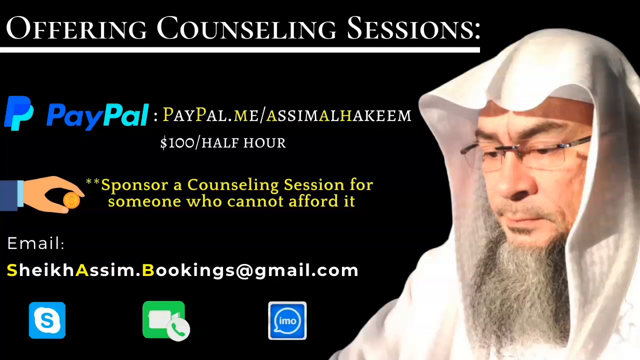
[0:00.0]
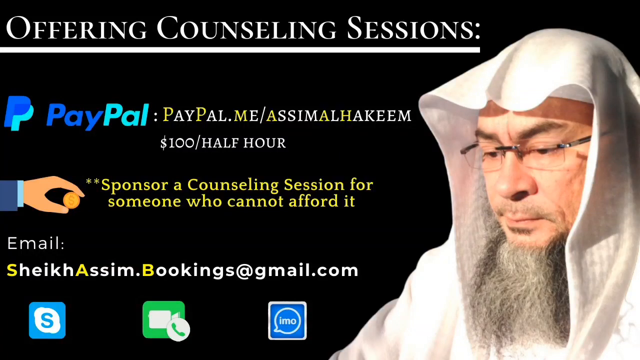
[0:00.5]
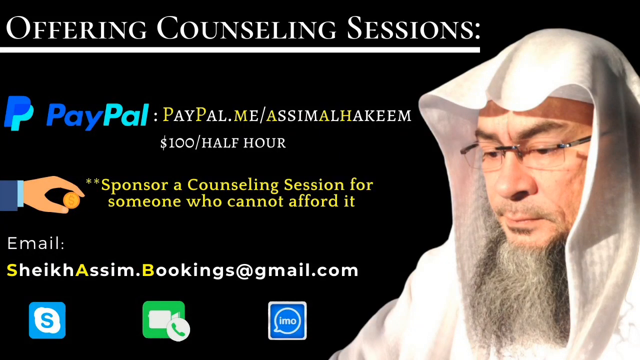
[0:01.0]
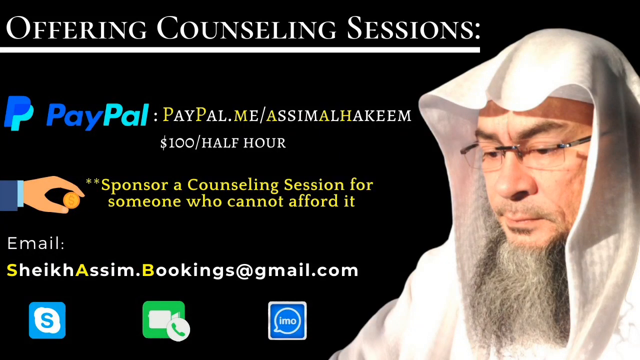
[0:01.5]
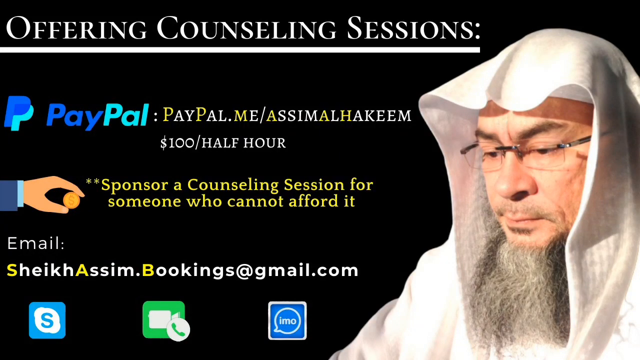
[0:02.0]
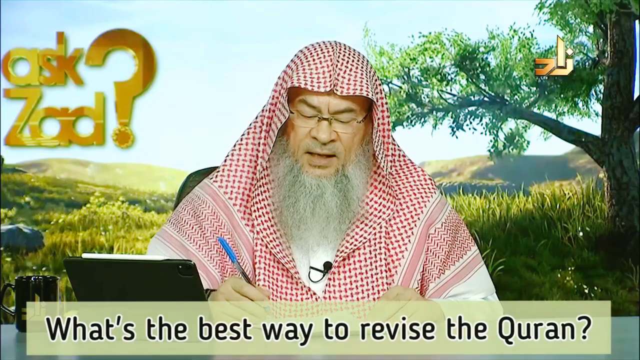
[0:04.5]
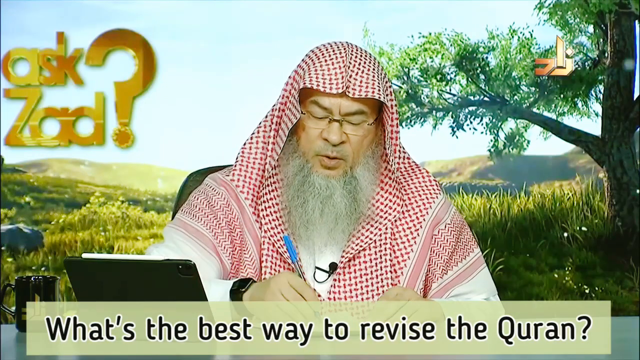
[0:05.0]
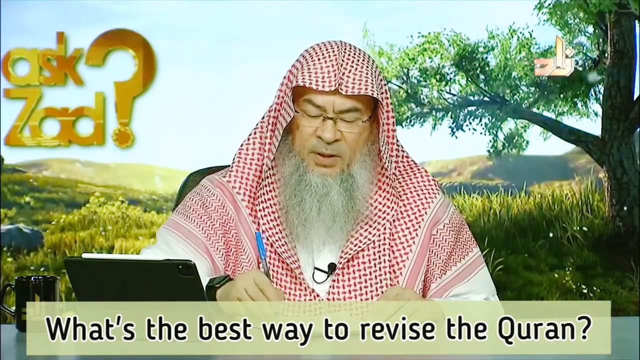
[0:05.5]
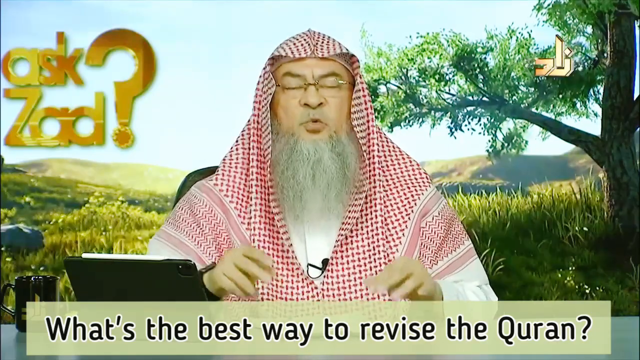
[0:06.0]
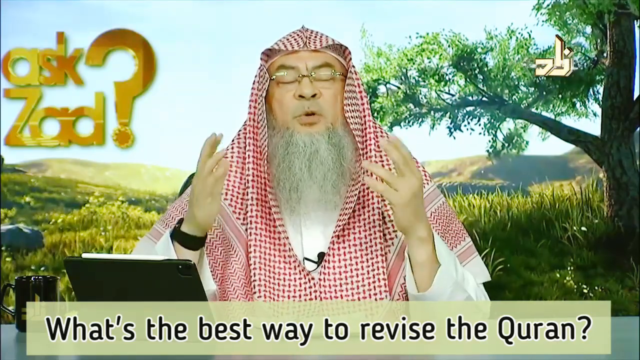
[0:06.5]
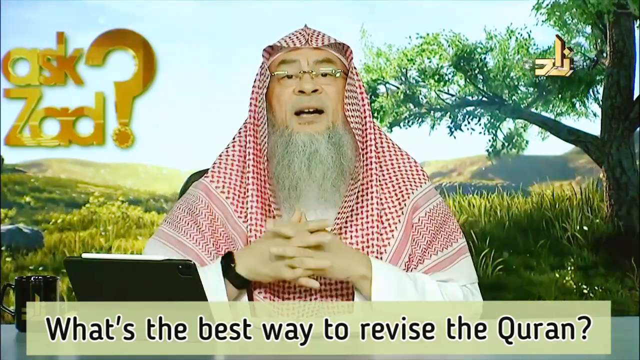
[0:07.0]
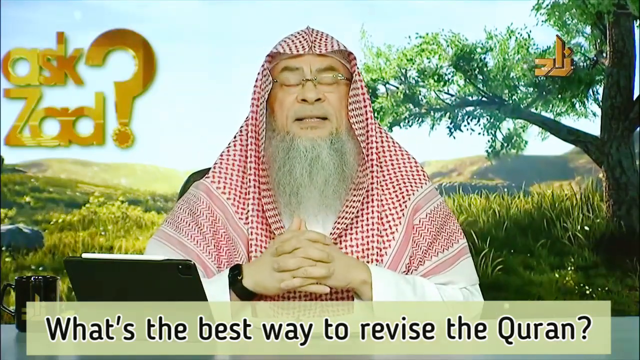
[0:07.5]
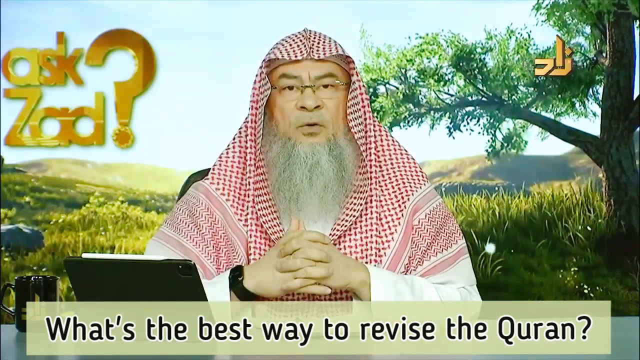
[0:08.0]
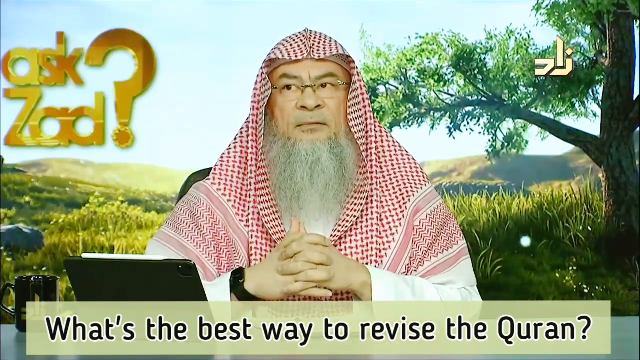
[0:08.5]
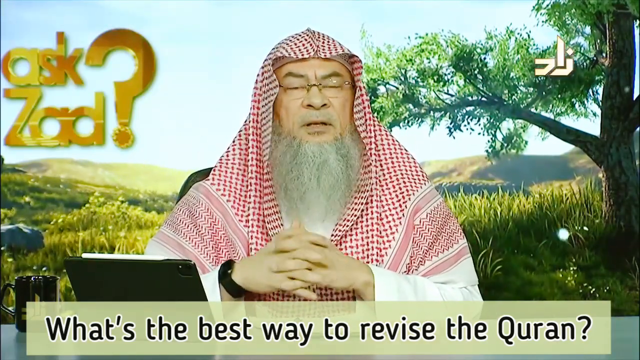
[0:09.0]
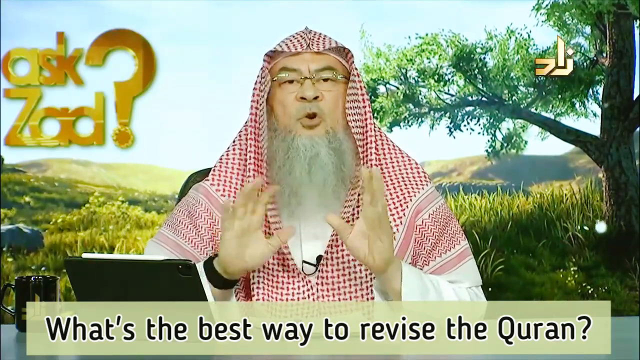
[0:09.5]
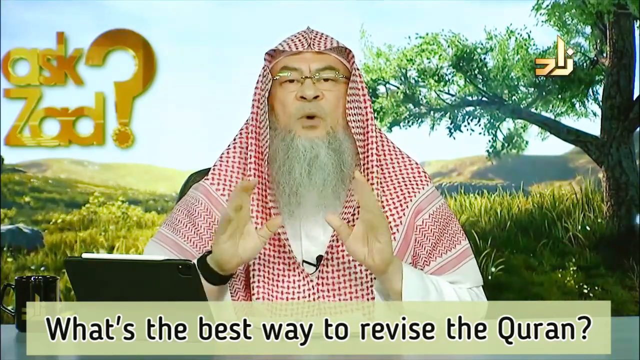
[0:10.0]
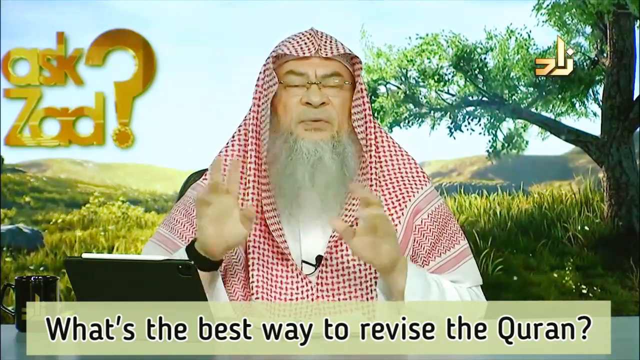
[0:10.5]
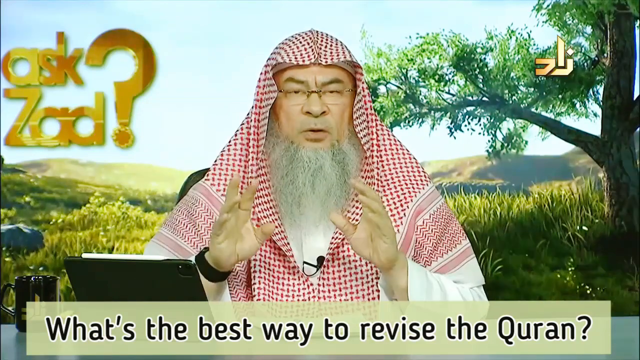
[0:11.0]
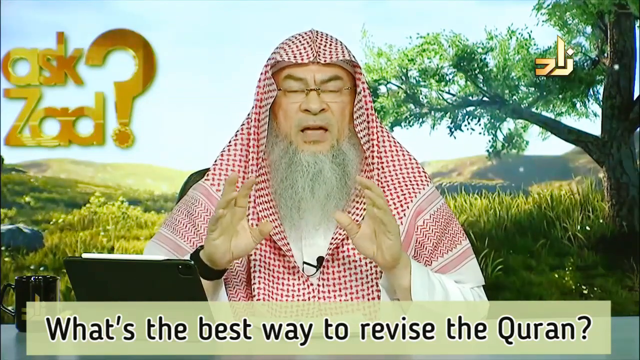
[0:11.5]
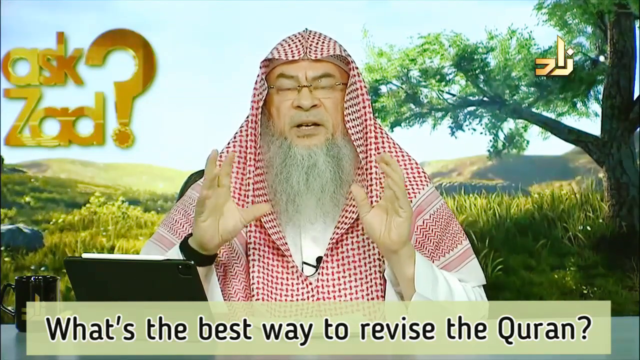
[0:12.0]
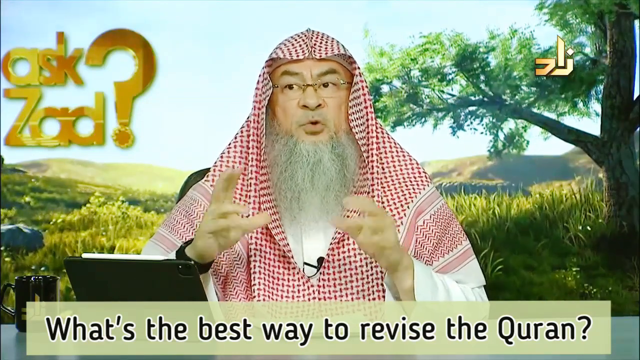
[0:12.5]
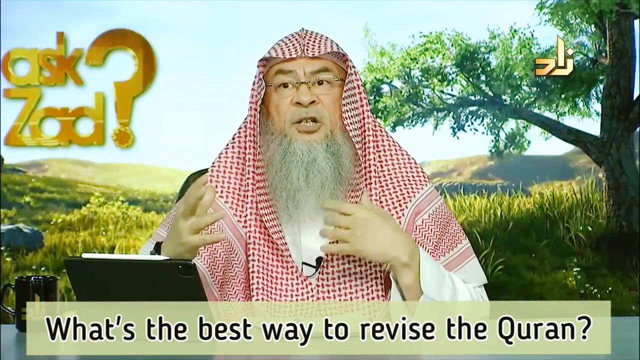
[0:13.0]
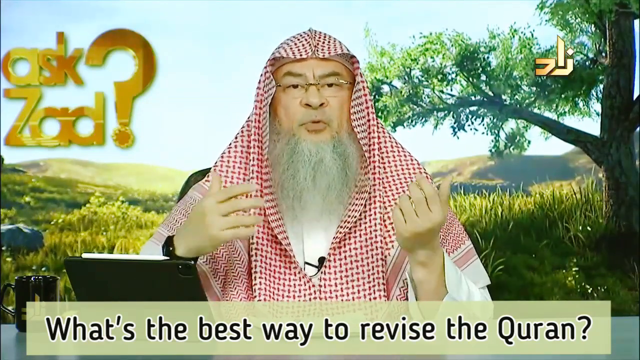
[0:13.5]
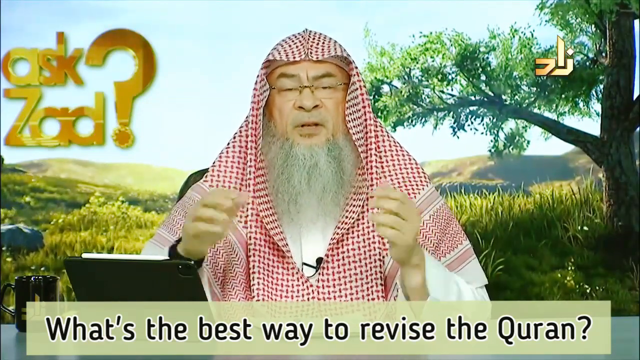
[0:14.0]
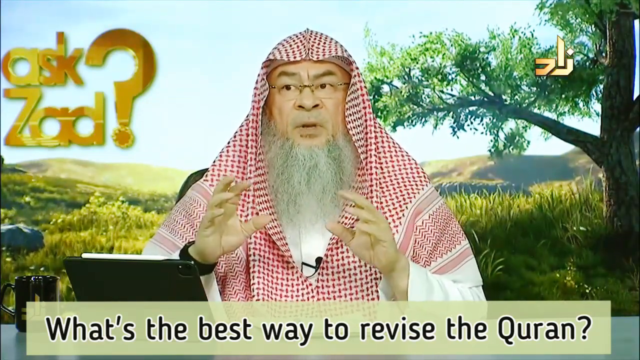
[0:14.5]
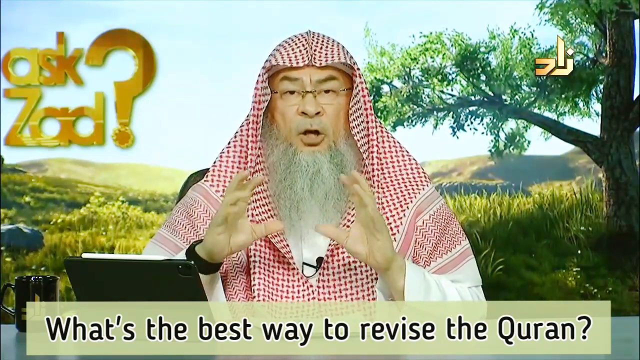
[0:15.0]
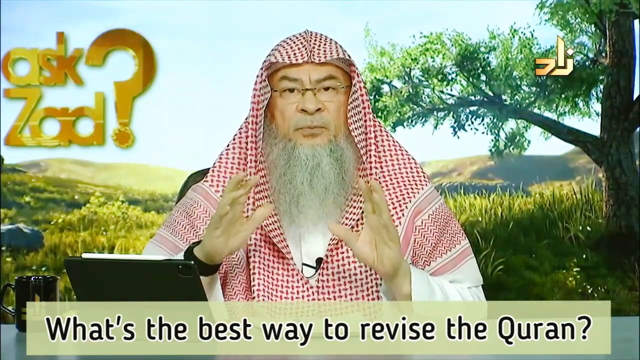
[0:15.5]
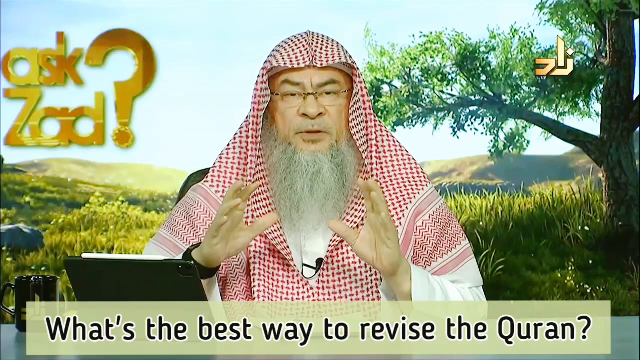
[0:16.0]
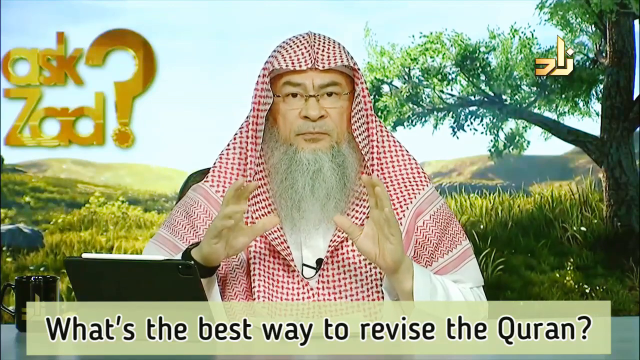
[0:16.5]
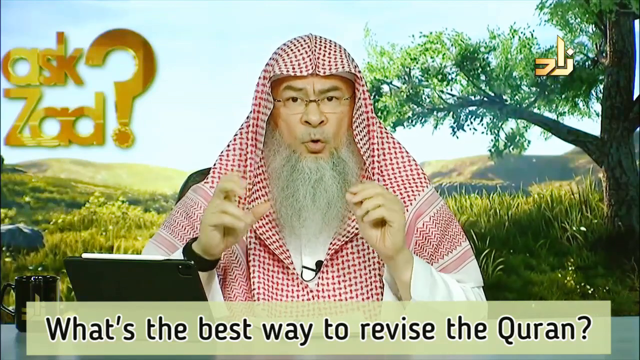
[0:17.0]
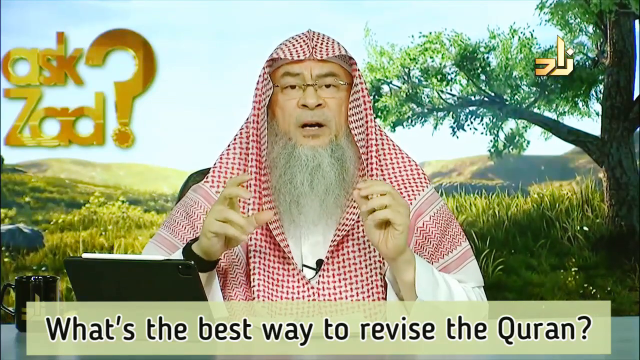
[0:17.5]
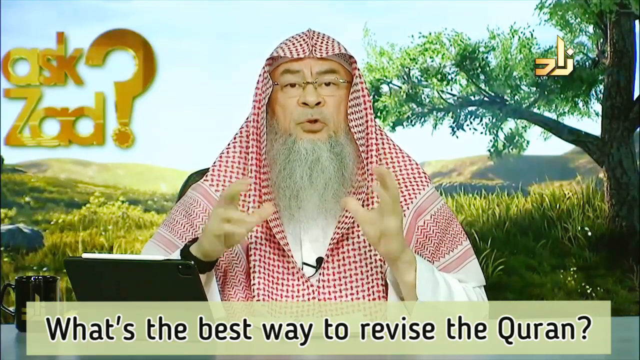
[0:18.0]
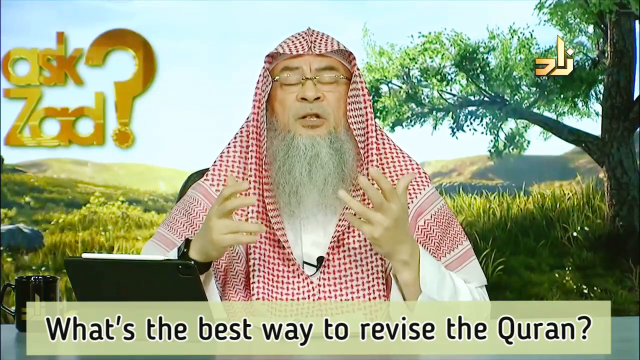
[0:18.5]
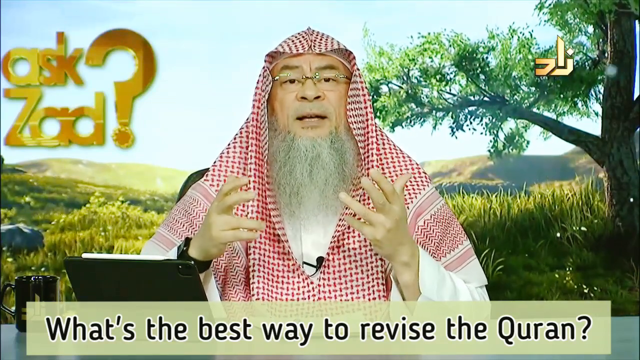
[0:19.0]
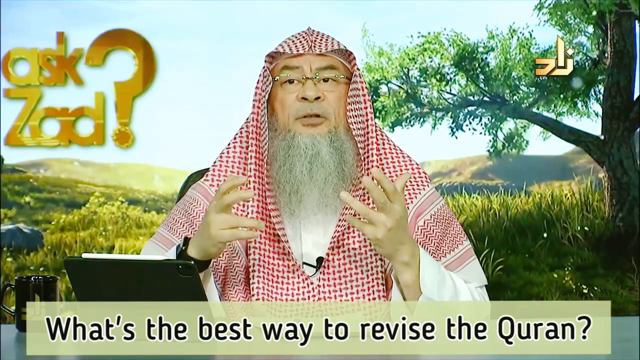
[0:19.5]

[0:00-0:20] This appears to be a live session or a YouTube video in which someone is offering counselling sessions, and he seems to be some sort of religious figure. The video begins with a title screen showing the person's face, looking down towards the ground, on the right side of a black screen. The left side lists his PayPal details, his email, Skype, FaceTime and IMO, and states that he charges $100 per half hour. In the next shot the man is sitting at a desk, writing something down and then referring to the camera. The subtitle at the bottom reads, "What is the best way to revise the Quran?" He gestures with his hands and speaks to the camera, occasionally looking off to the right side as if he might be reading from a prompt, waving both hands around. He wears glasses and a red and white cloak, has a long white beard, and wears a black watch on his right wrist.